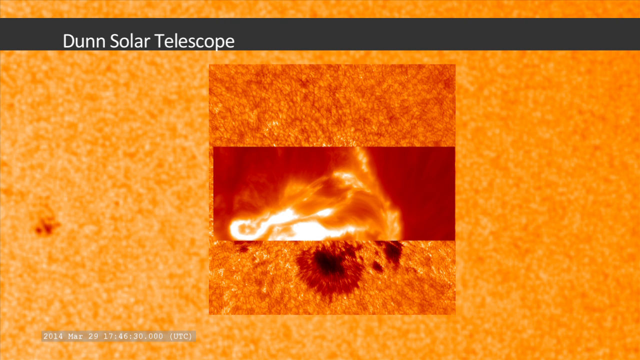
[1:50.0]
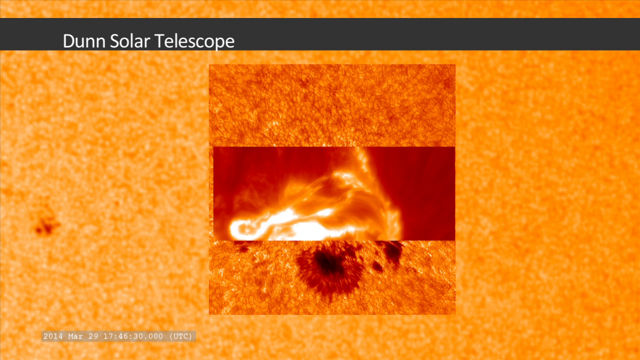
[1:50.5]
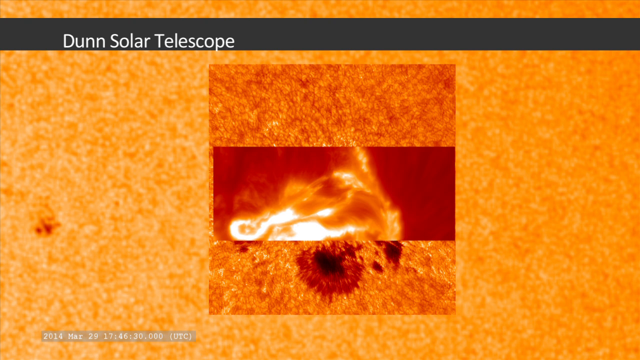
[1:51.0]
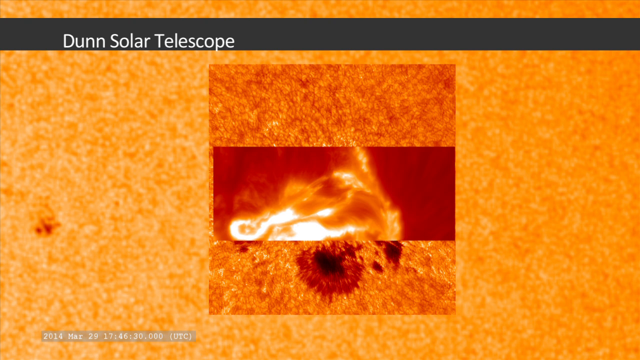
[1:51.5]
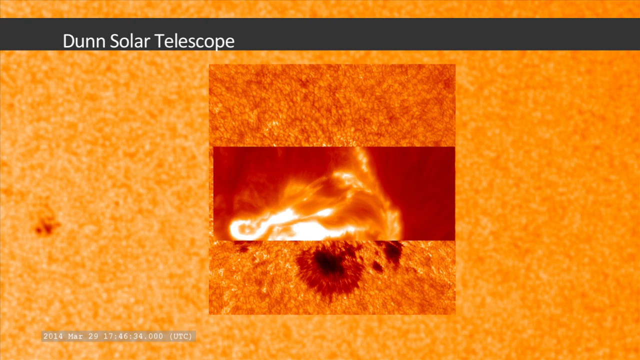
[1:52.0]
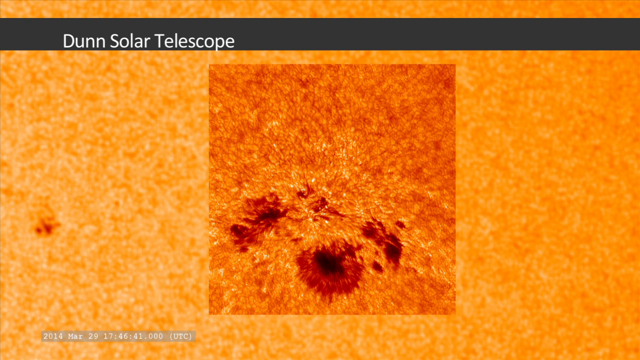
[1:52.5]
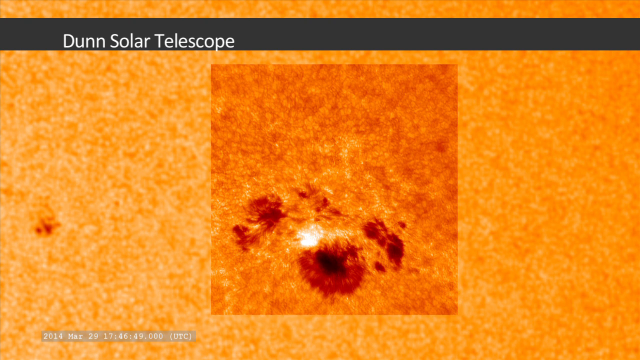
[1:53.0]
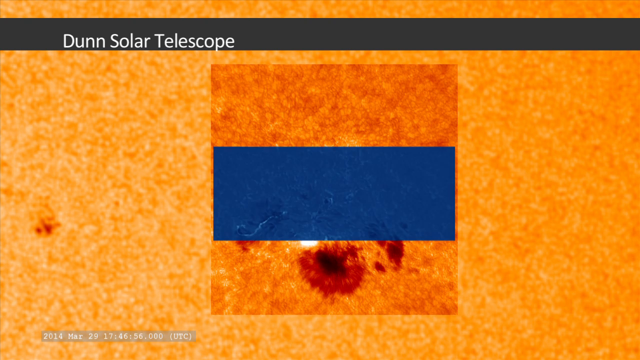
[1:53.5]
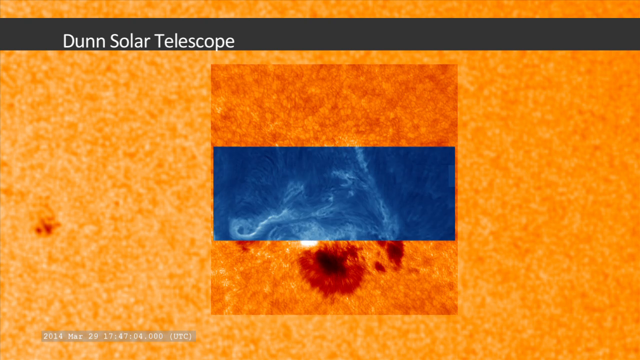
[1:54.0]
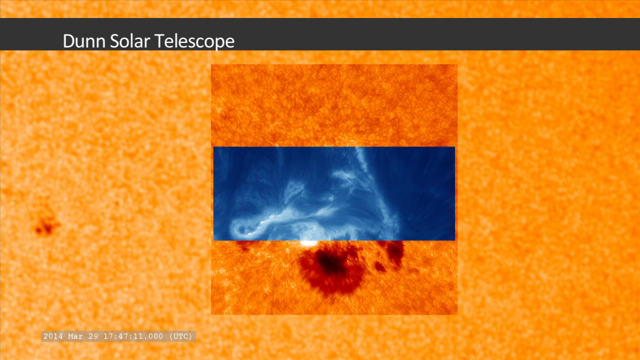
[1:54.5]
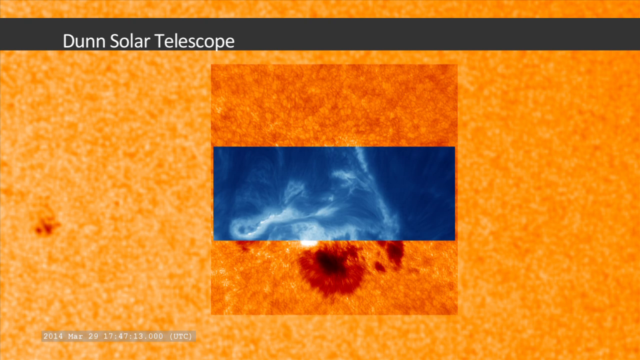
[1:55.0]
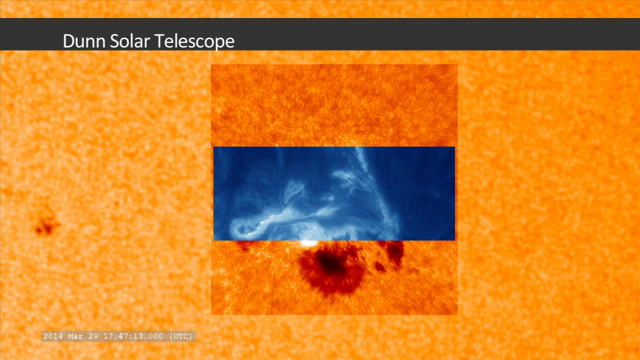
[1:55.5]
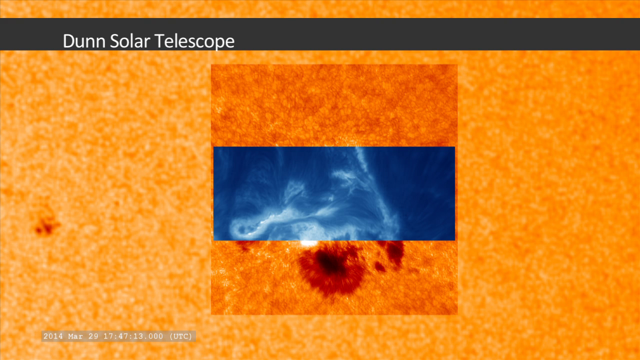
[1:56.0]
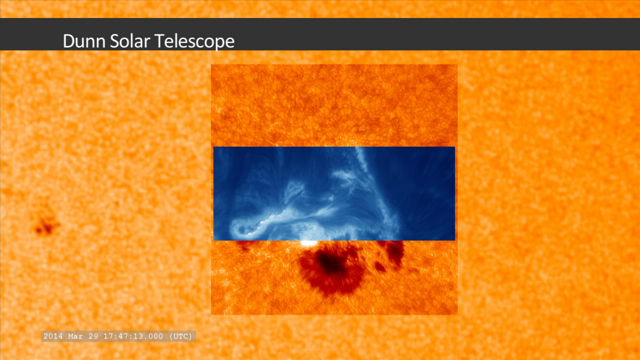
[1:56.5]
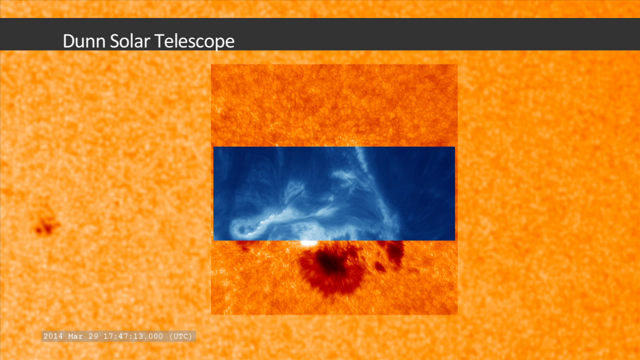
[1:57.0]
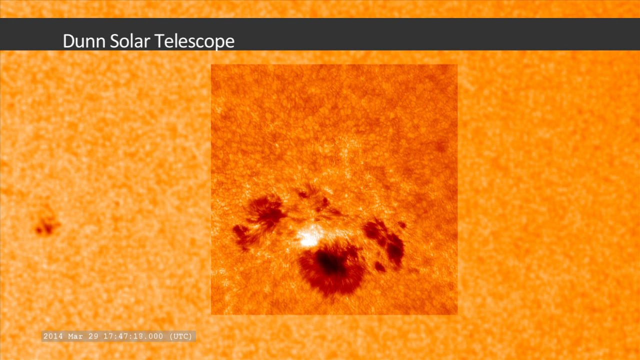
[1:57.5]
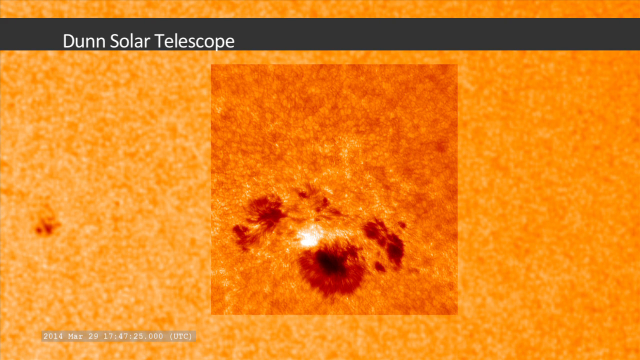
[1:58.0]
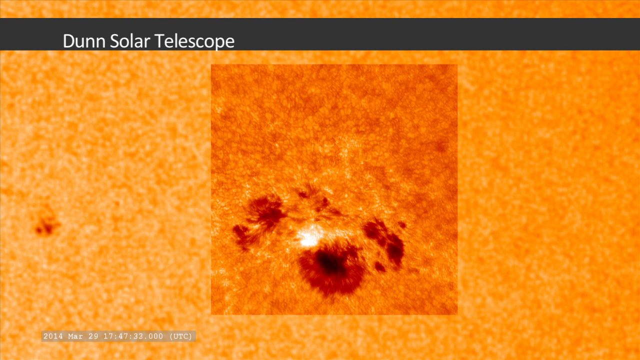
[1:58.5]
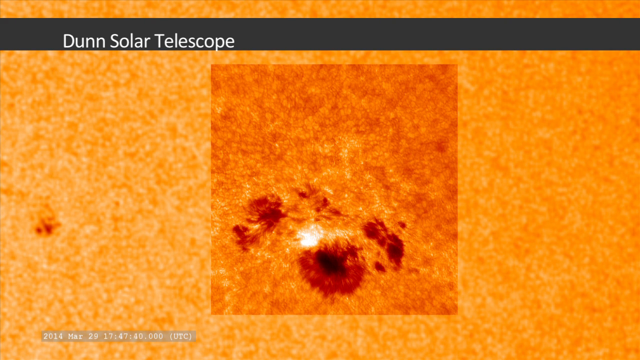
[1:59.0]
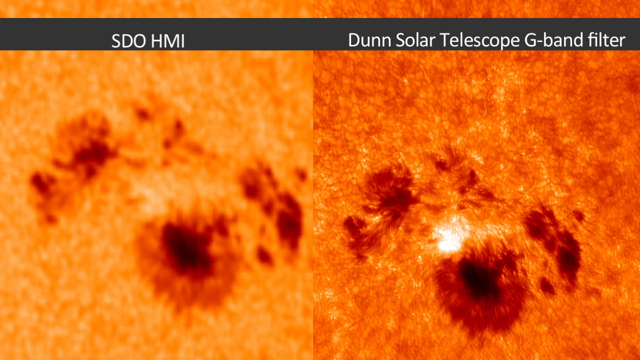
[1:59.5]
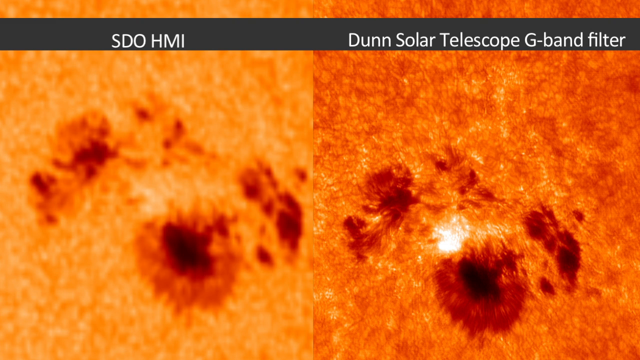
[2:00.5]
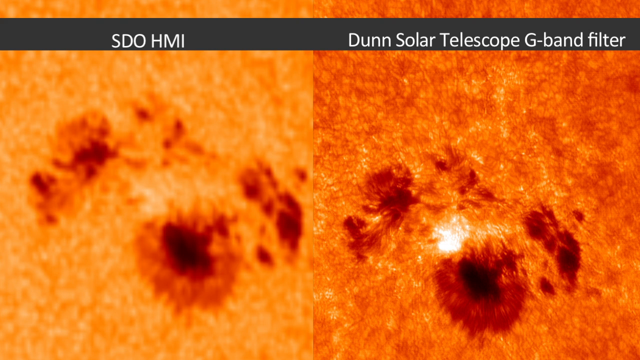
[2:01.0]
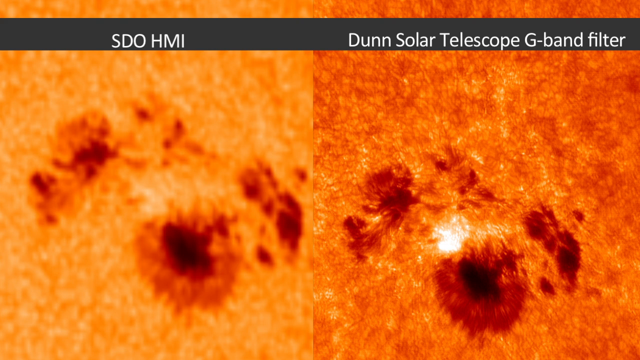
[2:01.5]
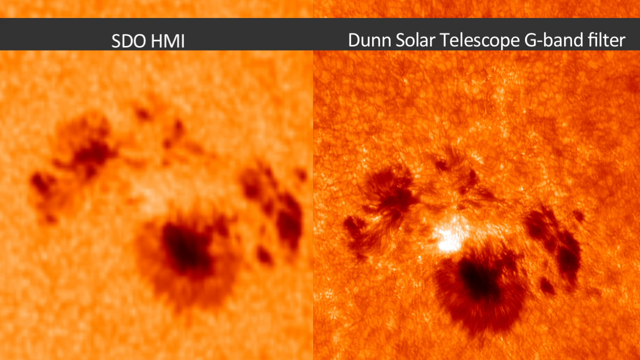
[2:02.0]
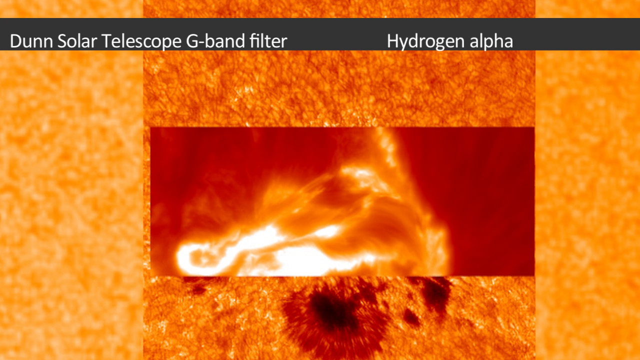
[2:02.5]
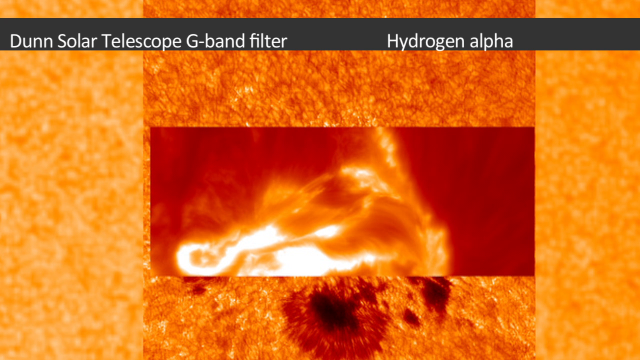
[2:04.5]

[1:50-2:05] A square with three images of the Sun is on the screen, with a close-up of the Sun behind it in the background. The background Sun is orange, yellow and red, with the speckles very clearly visible and lots of white, and it looks pretty light. The center image changes, showing other shots of the Sun with dark red patches and white patches, and also a blue space with white stringy areas that might represent solar flares. There is a comparison of two shots of the Sun, and another square with three images of the Sun, like a comparison, showing different patches in different areas, with dark red areas, orange areas and white solar flares. Then there is a shot of an orange and white solar flare with a dark red background. A gray strip with white text is at the top of the screen. In the bottom left corner, some of the images have dates, times and more information, but not all of them.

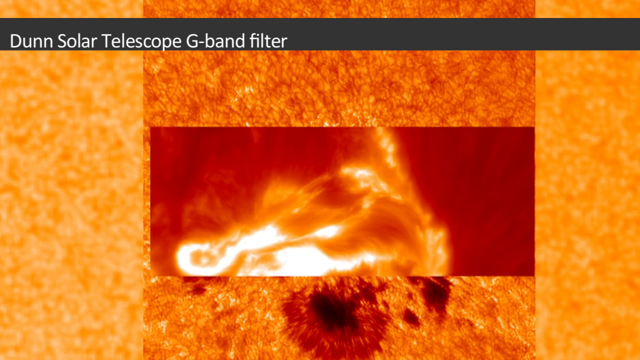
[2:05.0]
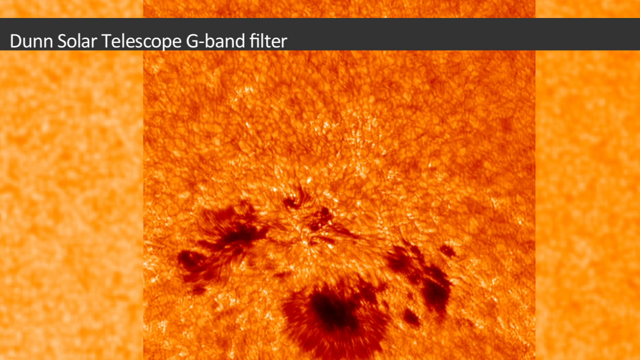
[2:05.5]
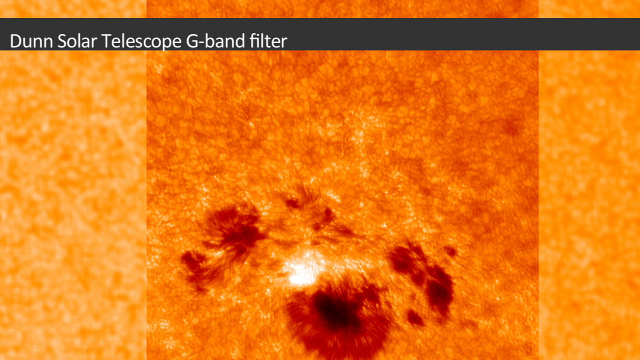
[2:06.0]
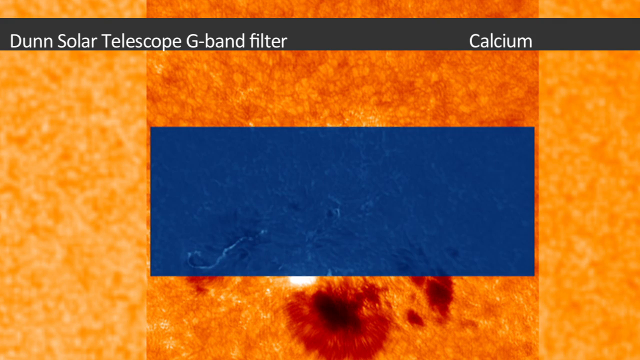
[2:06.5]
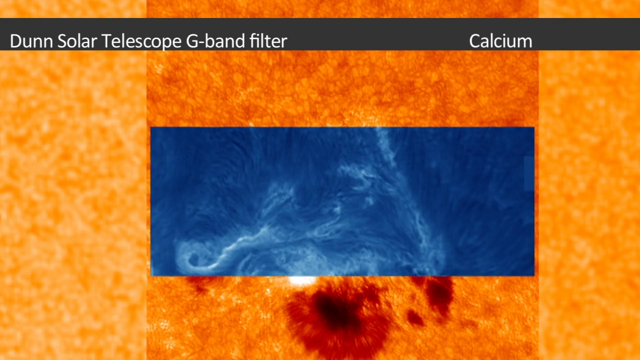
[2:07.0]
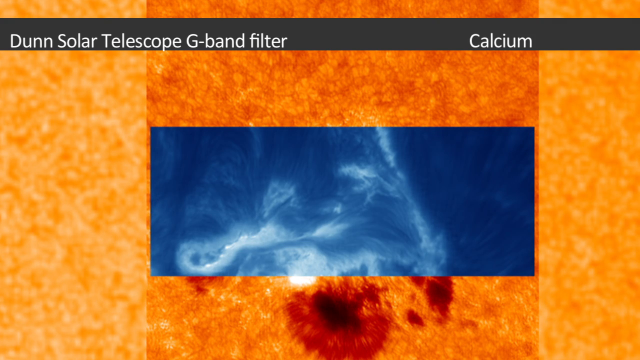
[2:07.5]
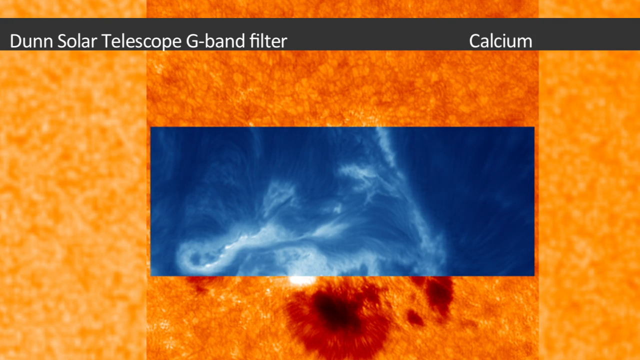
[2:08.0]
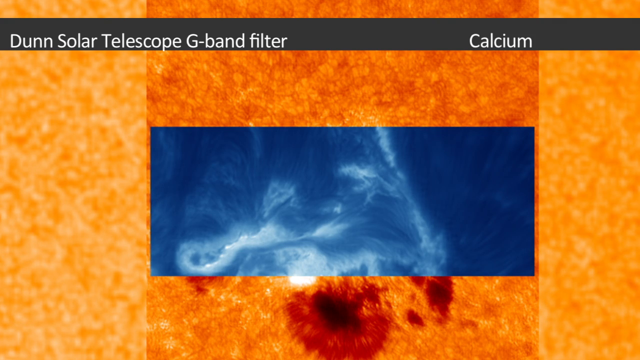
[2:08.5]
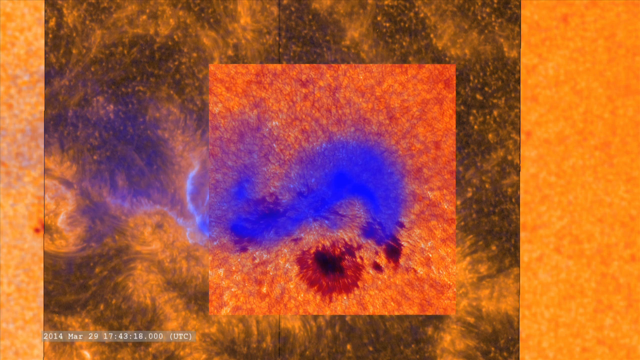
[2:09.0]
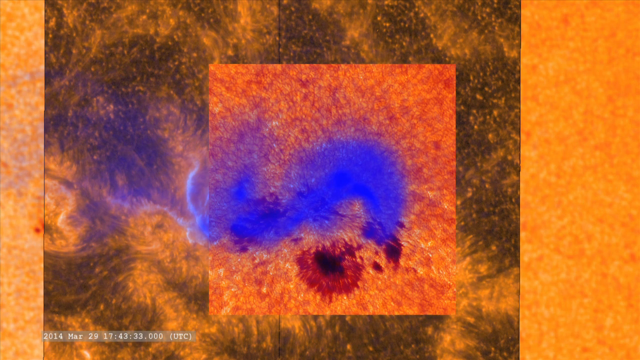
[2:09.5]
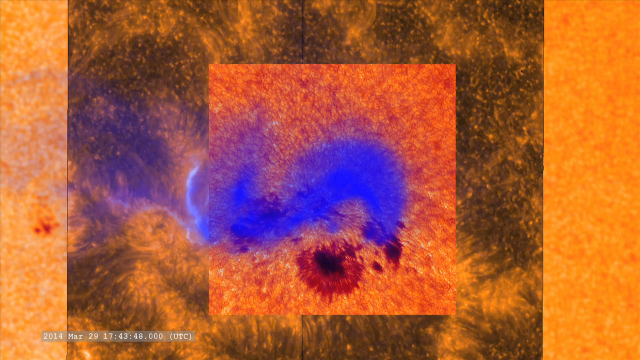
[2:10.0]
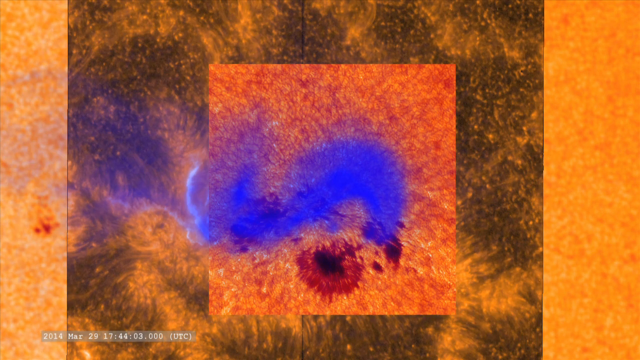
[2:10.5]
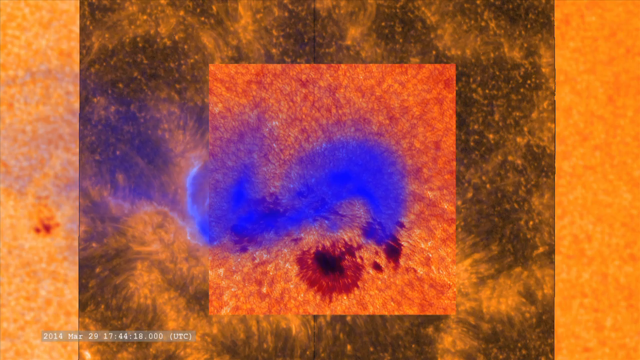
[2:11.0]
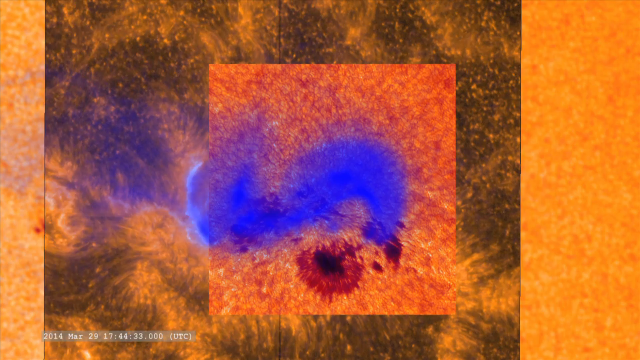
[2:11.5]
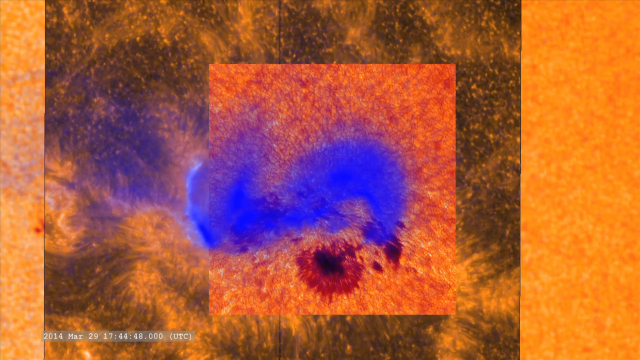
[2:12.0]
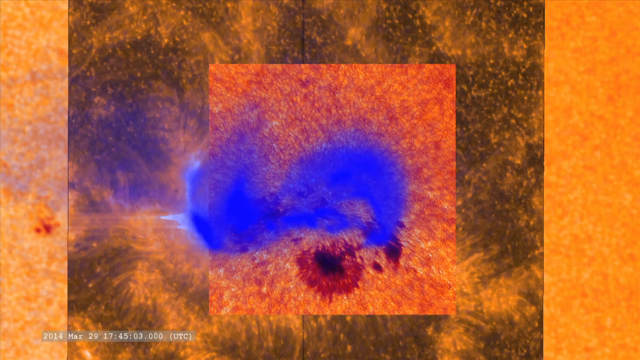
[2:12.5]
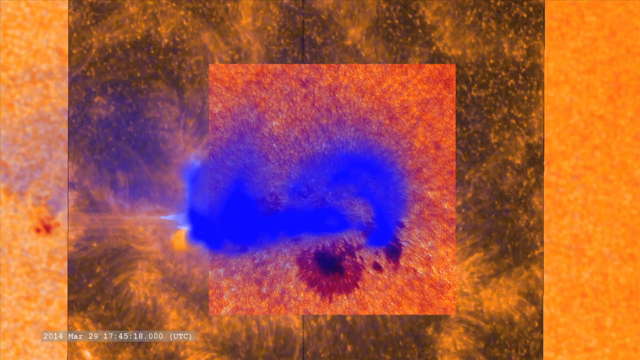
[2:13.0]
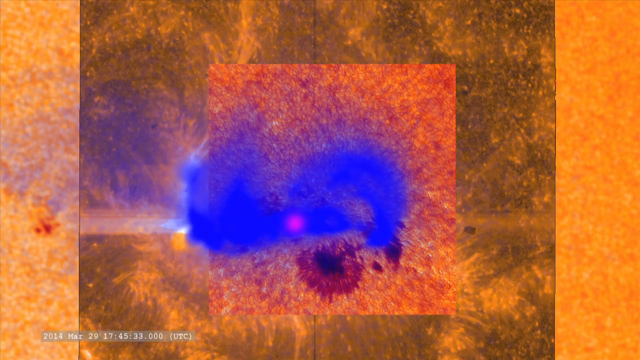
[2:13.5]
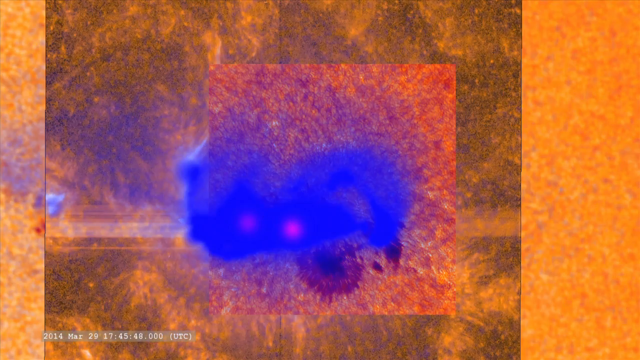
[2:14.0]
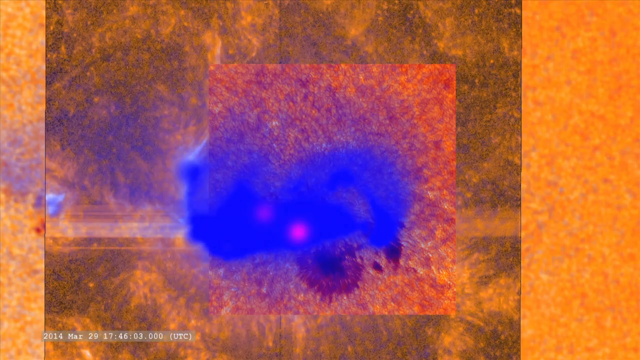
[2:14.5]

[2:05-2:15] A square shows the Sun, with another close-up of the Sun in the background that looks very bright orange with yellow and white speckles on its surface. A close-up shows a dark red patch with white patches around it, which might represent solar flares, and then a lighter patch. Then a rectangle of blue with white streaks across it appears. Next, another square shows a close-up of the Sun with bright blue streaks added digitally over it; it is not clear what they are supposed to be. Small purple dots float around, possibly outlining a solar flare on the surface of the Sun, and for a second there is a yellow orb next to the purple spots. Behind this square, a darker, kind of brownish square moves back and forth; it looks like a transparent overlay over the background. In the bottom left corner, the date and time are written in white text on a transparent gray strip. The boxes are all clearly outlined, showing different shots of the Sun. The close-up of the Sun in the background has a small dark orange patch on the left.